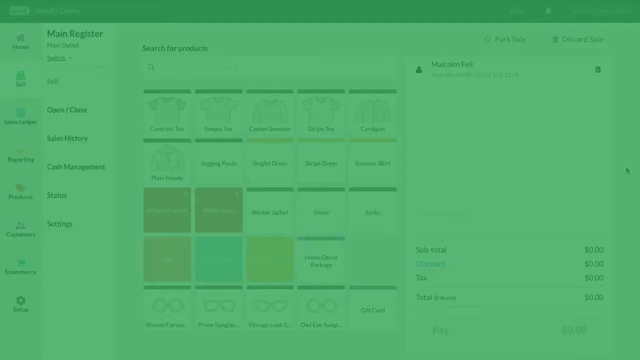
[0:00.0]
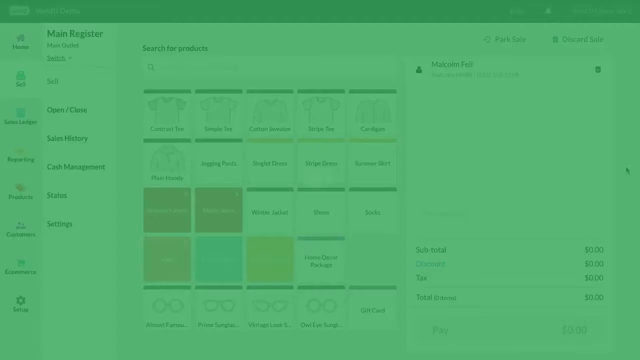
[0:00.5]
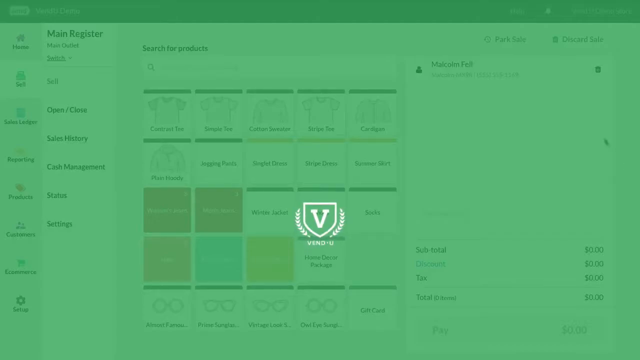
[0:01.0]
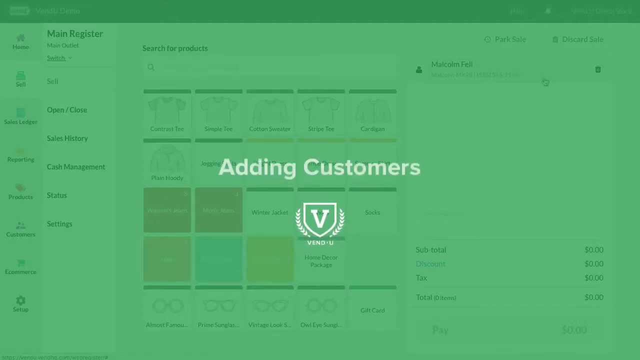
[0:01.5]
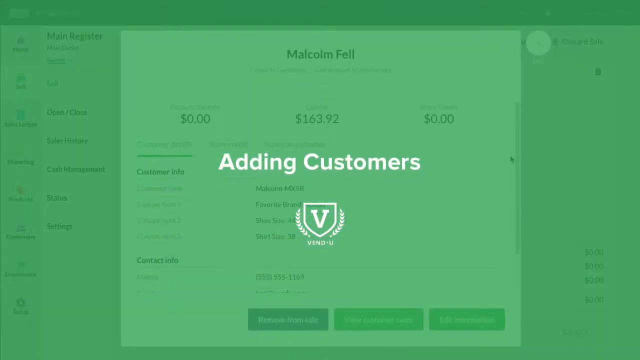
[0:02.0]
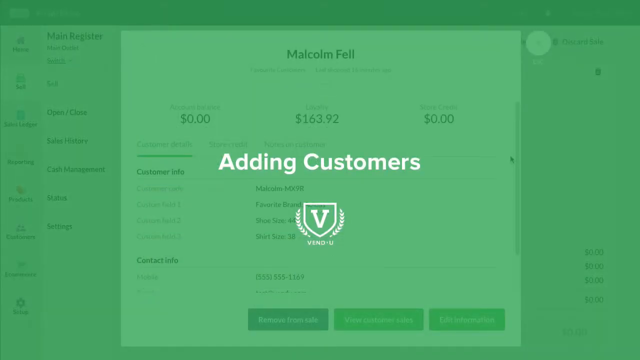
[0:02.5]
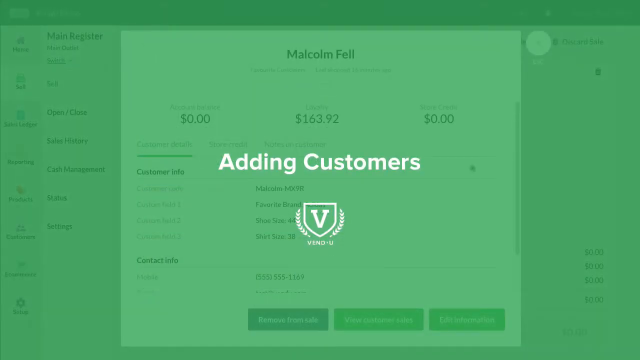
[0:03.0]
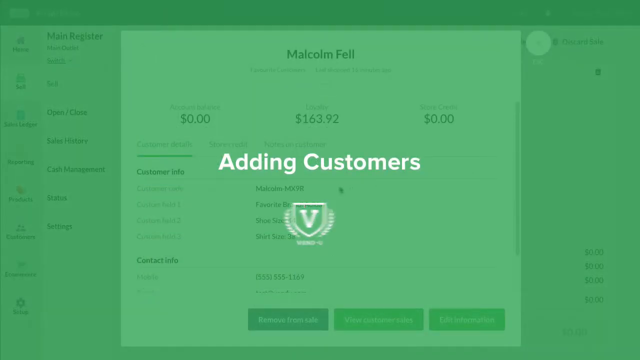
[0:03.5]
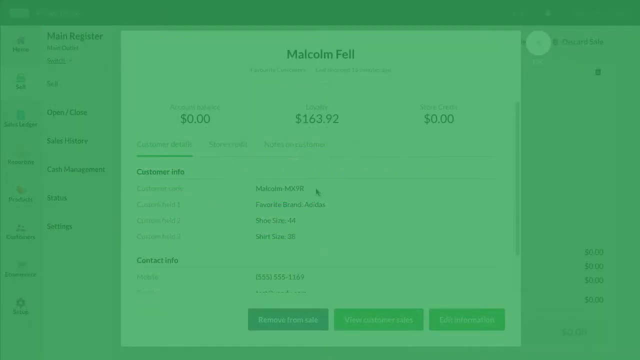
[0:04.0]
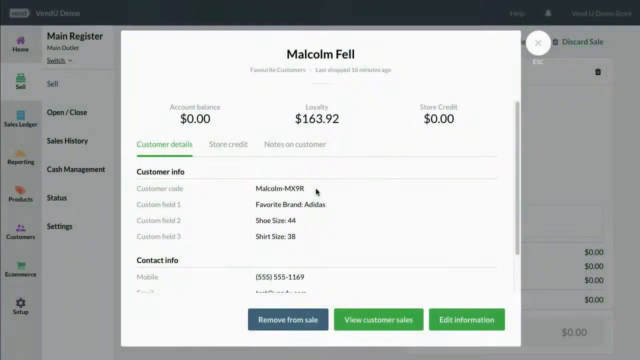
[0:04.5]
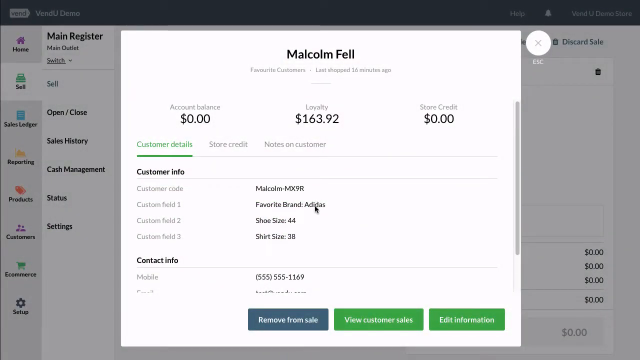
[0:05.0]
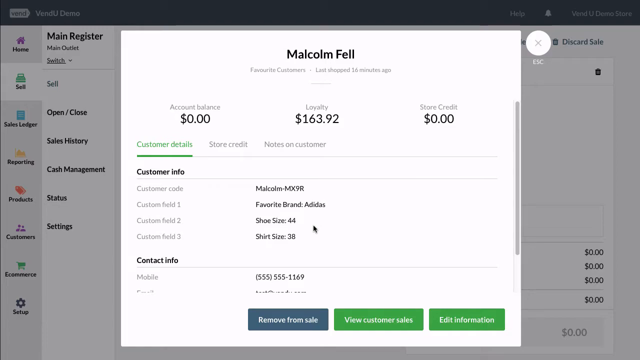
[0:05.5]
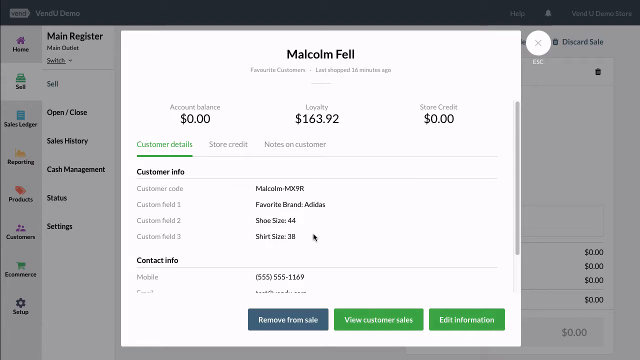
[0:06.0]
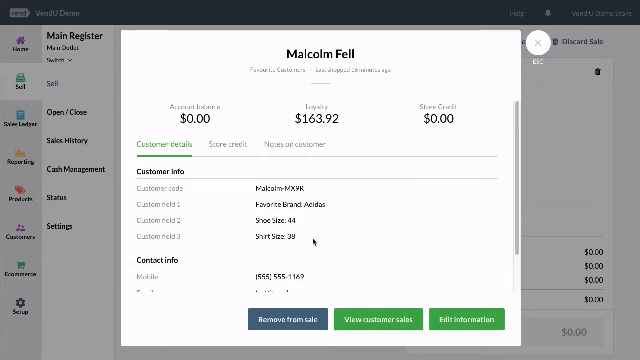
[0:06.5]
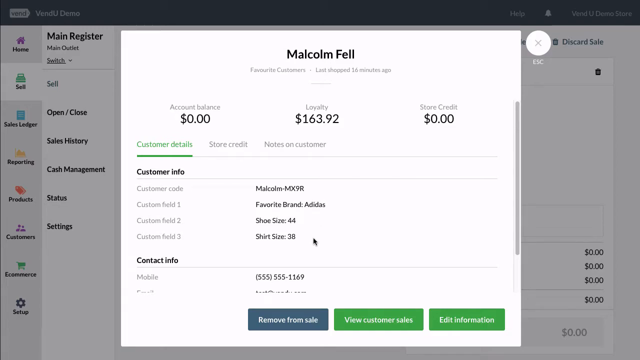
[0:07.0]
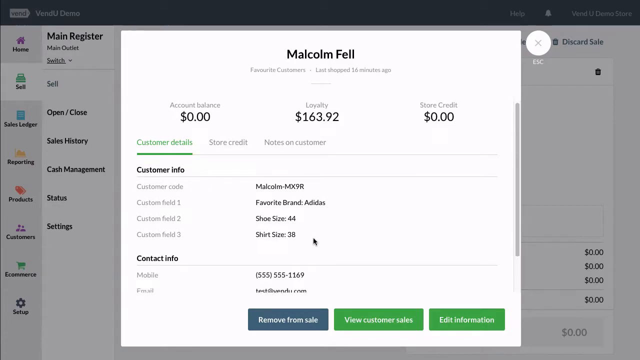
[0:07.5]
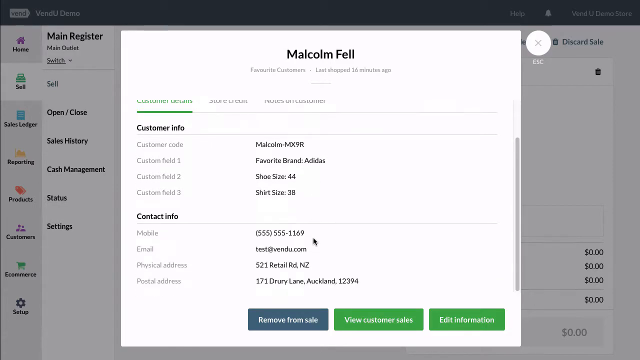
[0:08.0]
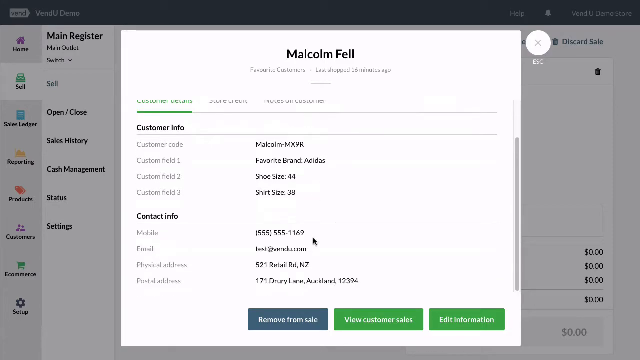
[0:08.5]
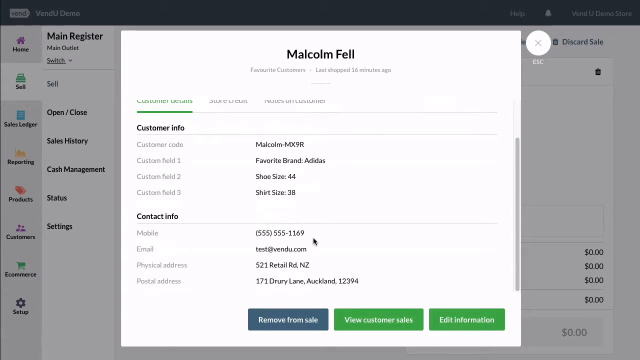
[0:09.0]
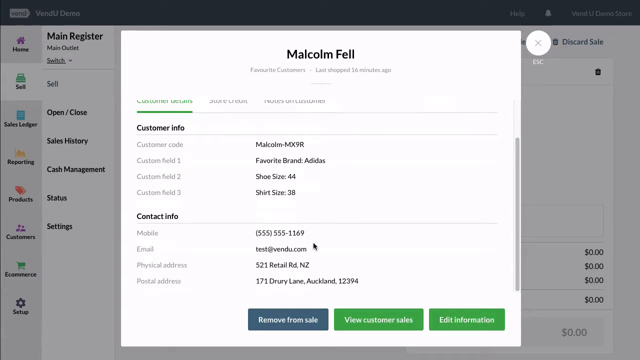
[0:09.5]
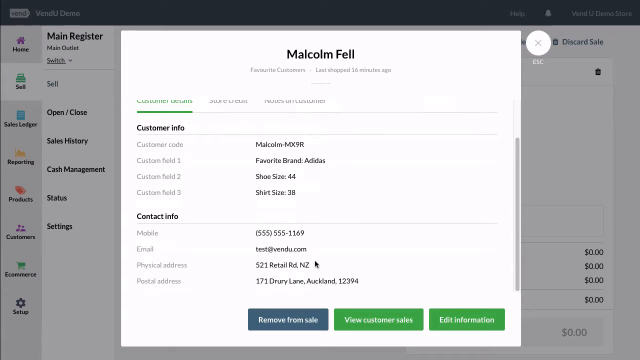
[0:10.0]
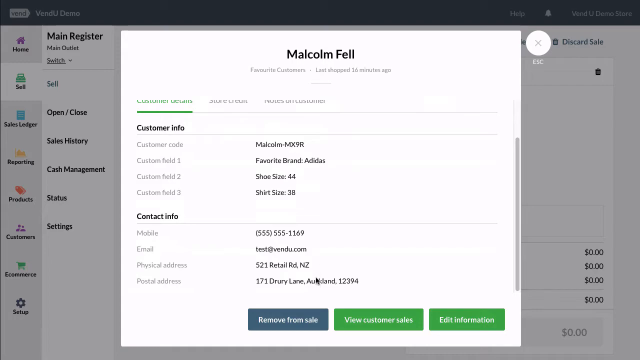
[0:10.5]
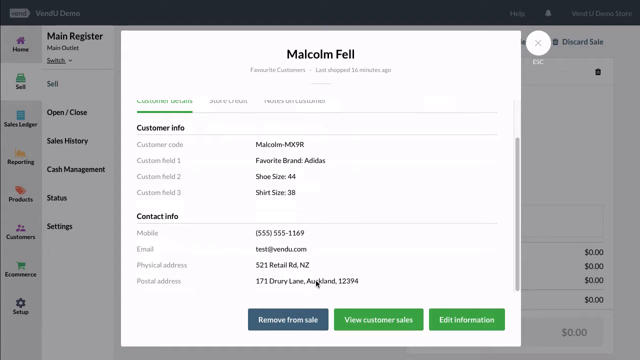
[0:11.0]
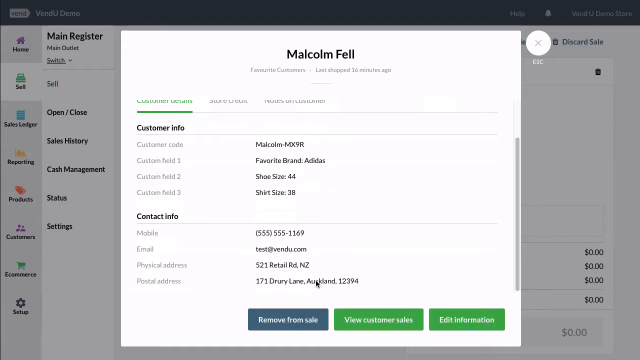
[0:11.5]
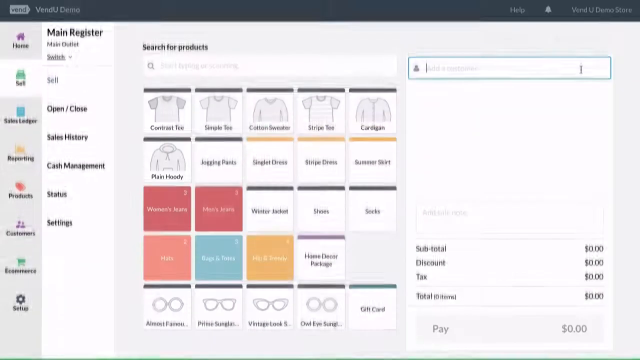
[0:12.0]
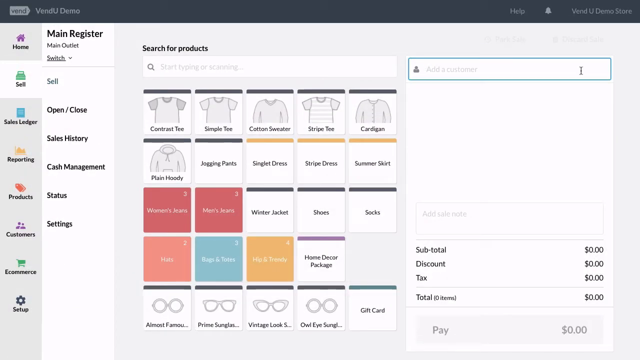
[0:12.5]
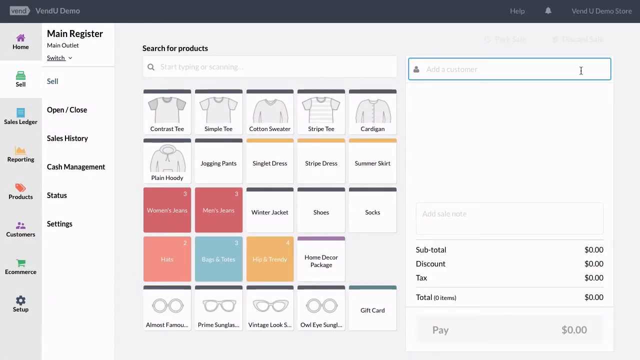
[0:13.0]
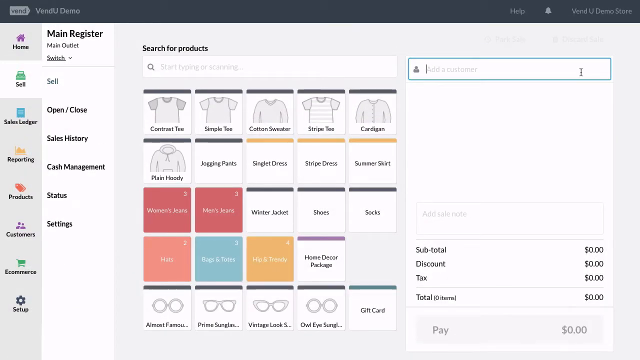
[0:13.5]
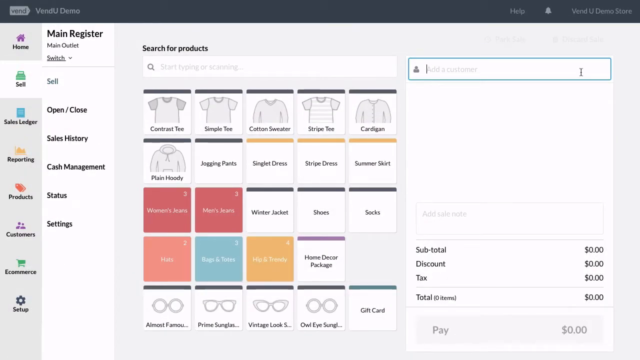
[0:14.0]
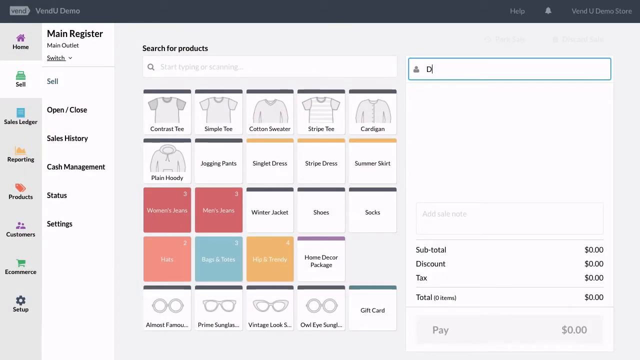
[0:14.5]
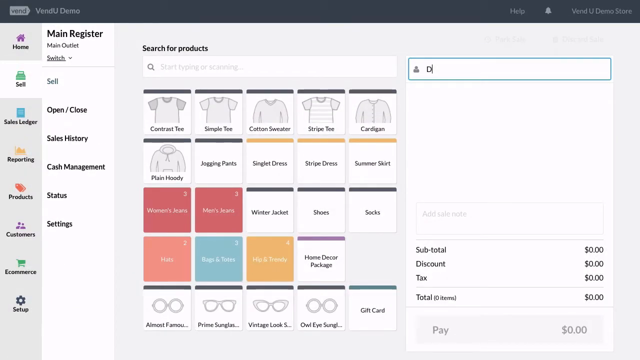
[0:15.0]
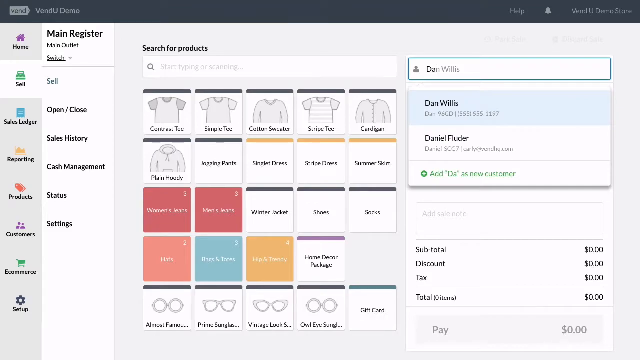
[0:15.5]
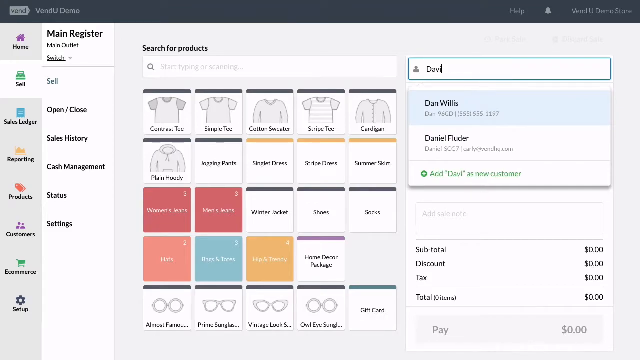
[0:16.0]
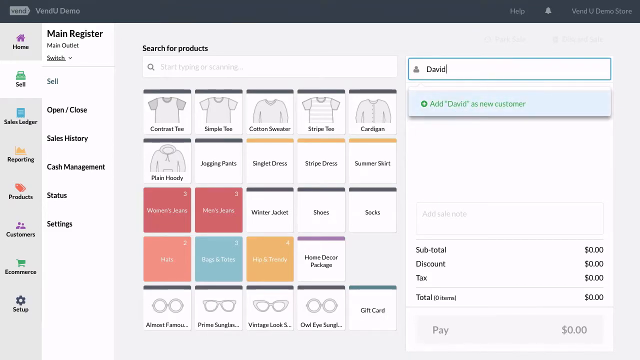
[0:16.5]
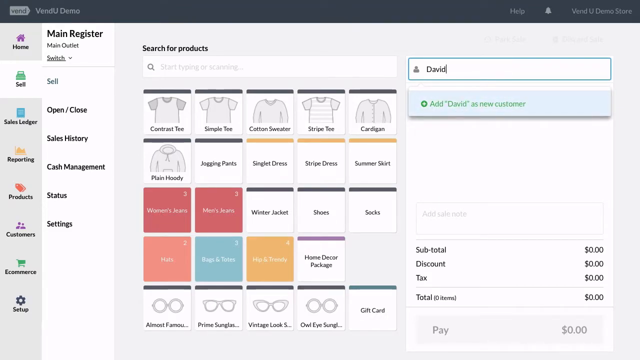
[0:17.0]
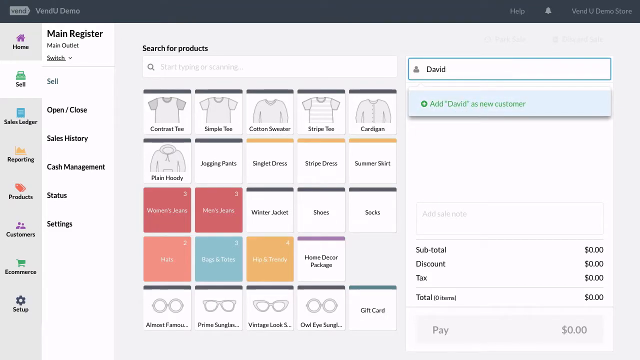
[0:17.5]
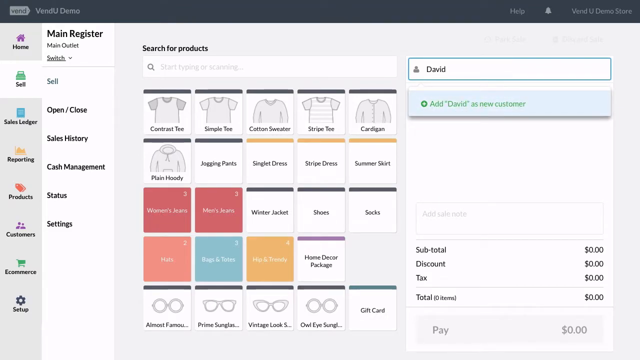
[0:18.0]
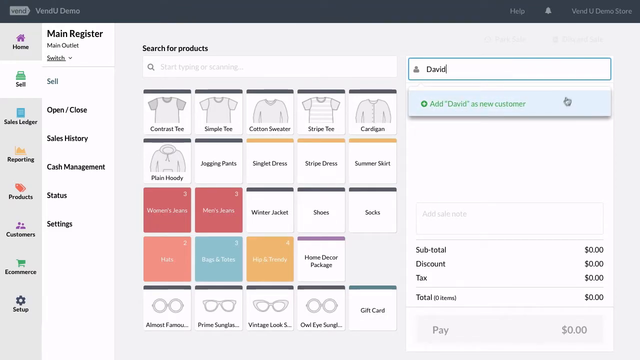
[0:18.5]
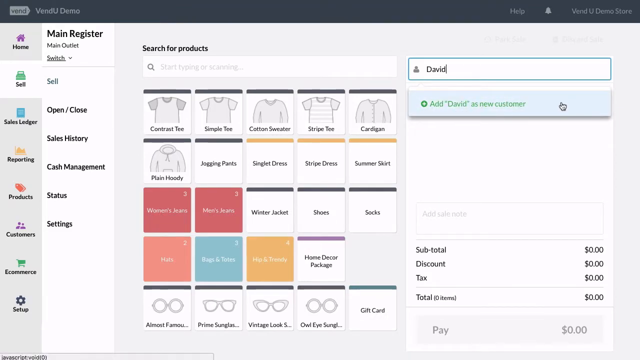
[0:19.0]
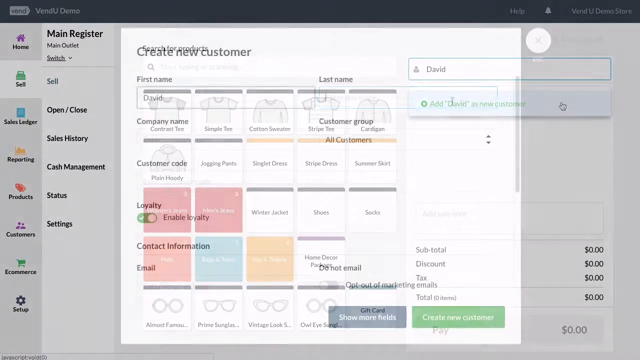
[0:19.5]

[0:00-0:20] Names of people pop up on the screen, and clothes are displayed for sale, along with a search for products. A page shows customers' information, with dresses and jackets displayed on it. The page is white, with blue and green buttons that have writing on them, and total amounts of money are written on the page. There is the main register. On the left are buttons that can be clicked, including an open and close button, and on the right an amount of money is shown. A page that has just opened has pink, orange, blue and yellow colors. The dresses shown in the picture are all white.